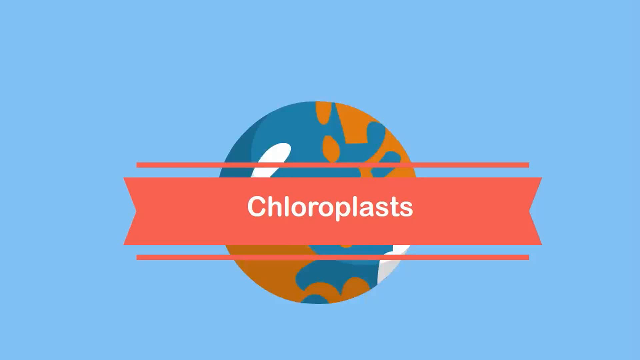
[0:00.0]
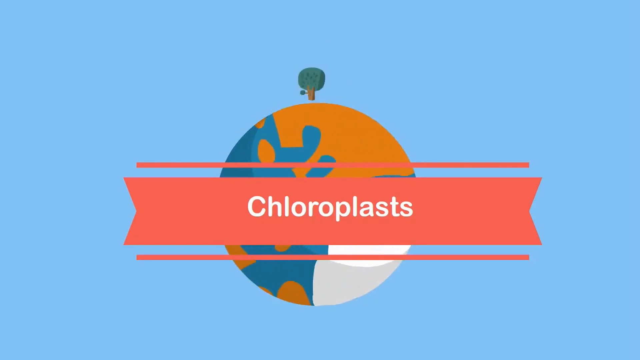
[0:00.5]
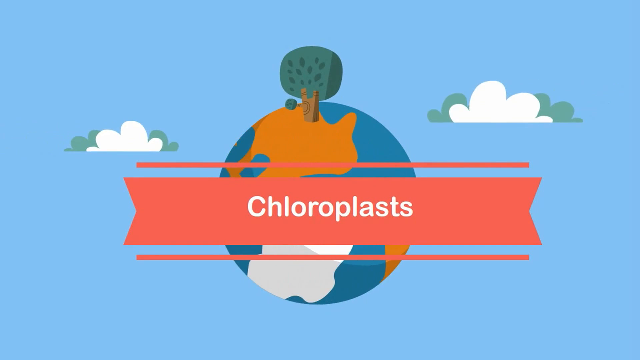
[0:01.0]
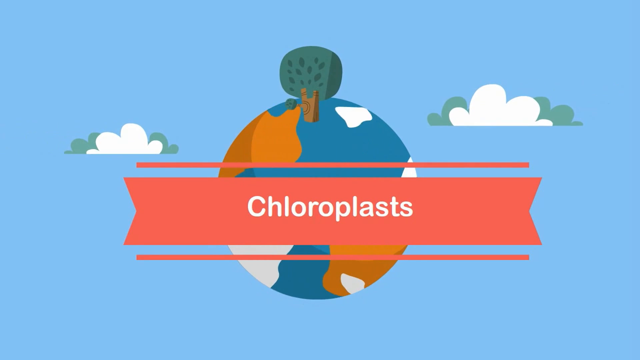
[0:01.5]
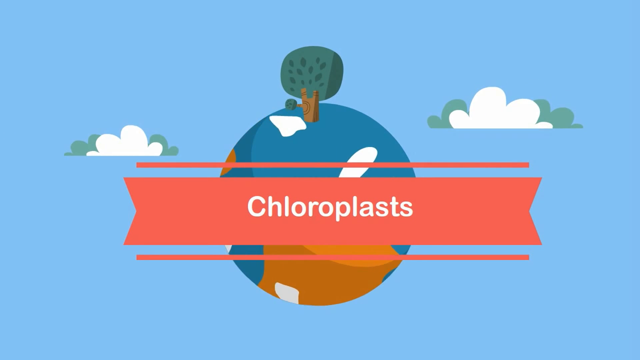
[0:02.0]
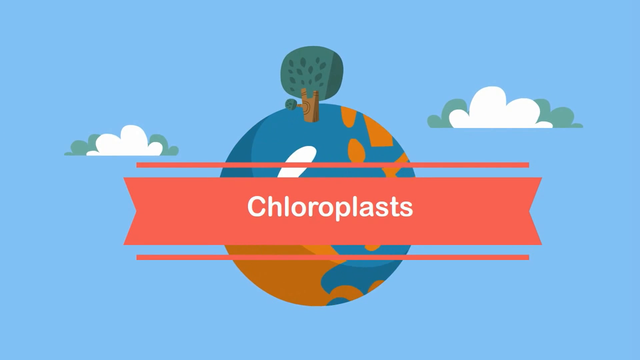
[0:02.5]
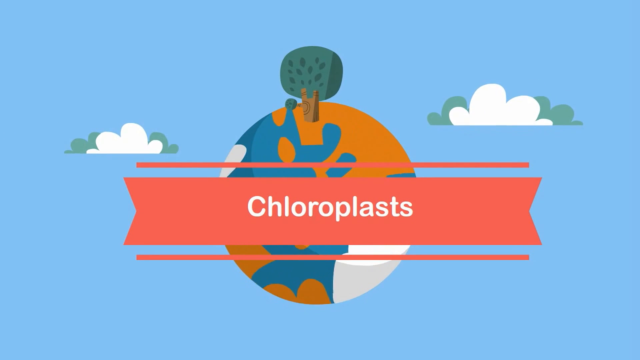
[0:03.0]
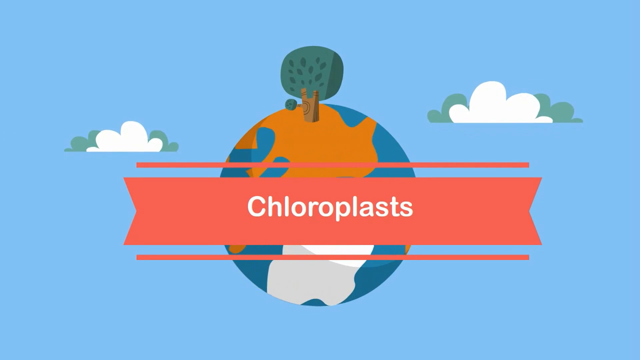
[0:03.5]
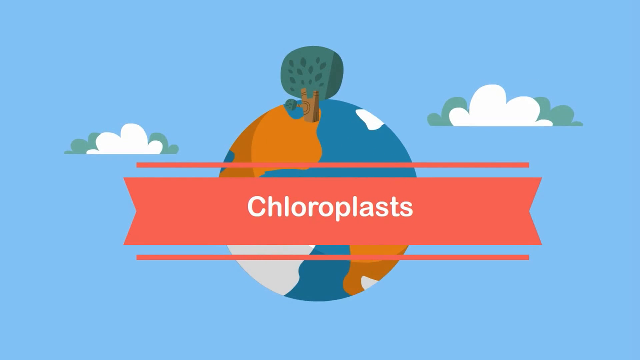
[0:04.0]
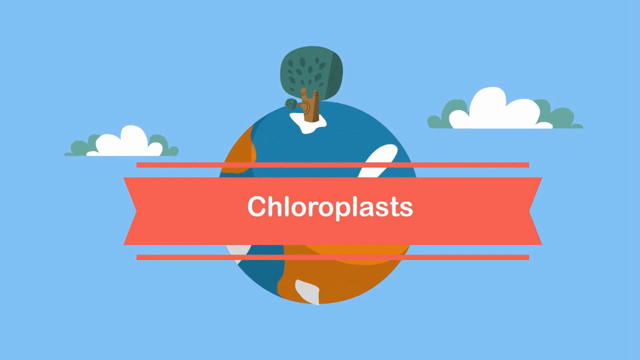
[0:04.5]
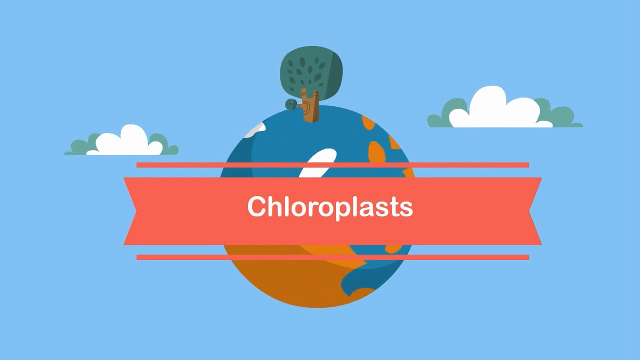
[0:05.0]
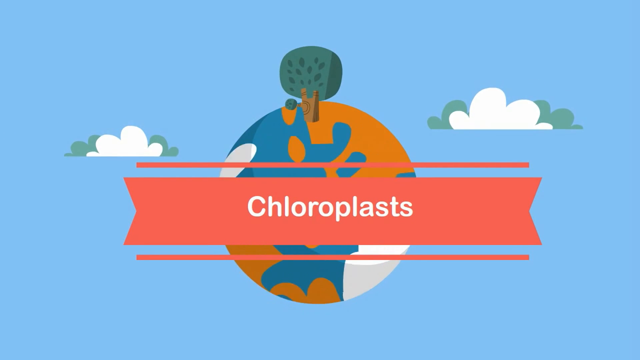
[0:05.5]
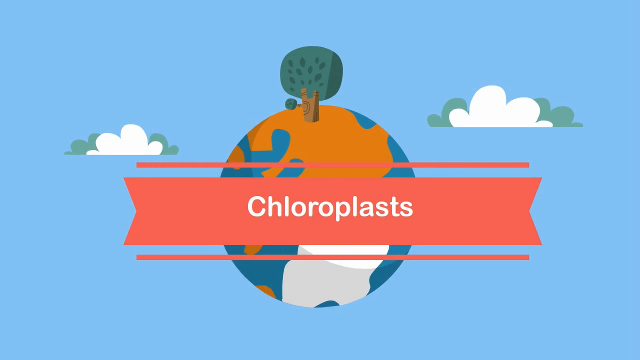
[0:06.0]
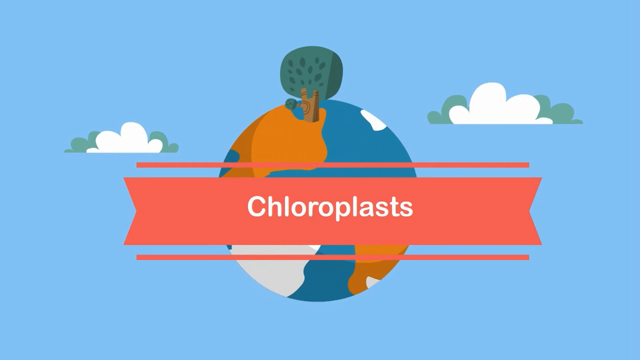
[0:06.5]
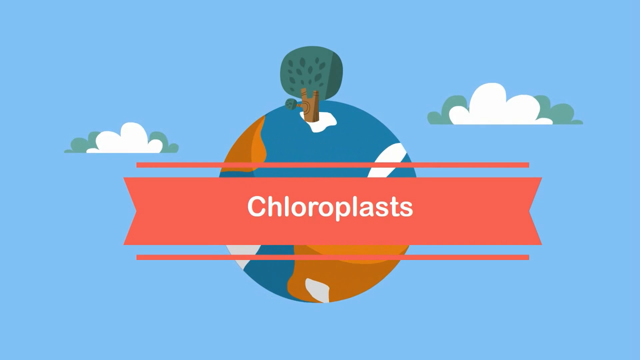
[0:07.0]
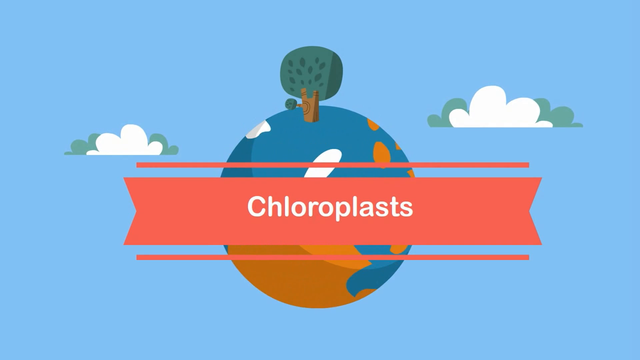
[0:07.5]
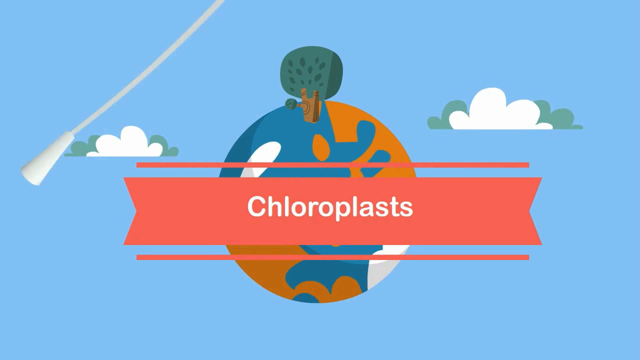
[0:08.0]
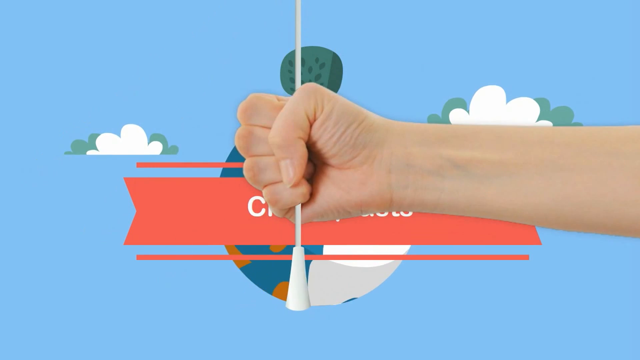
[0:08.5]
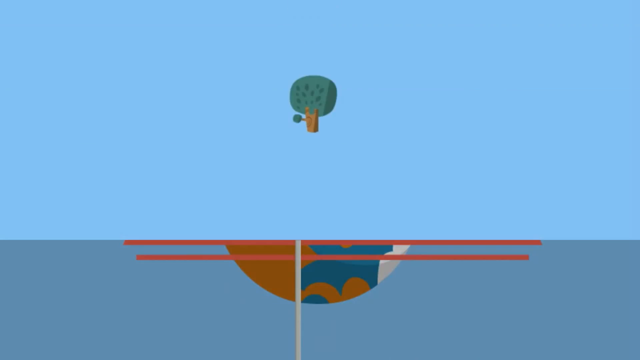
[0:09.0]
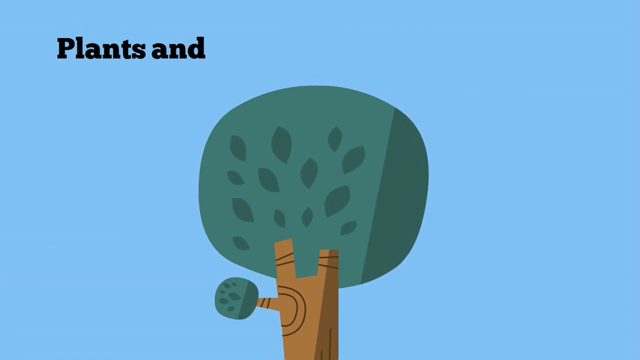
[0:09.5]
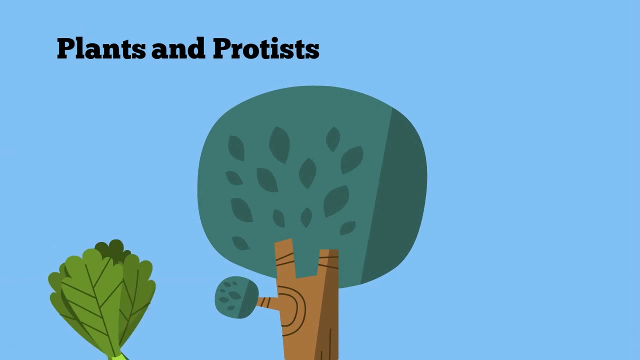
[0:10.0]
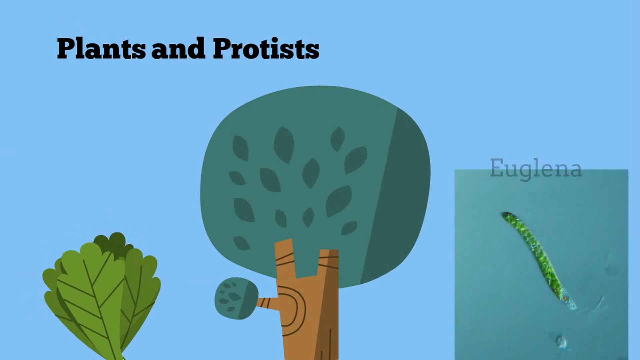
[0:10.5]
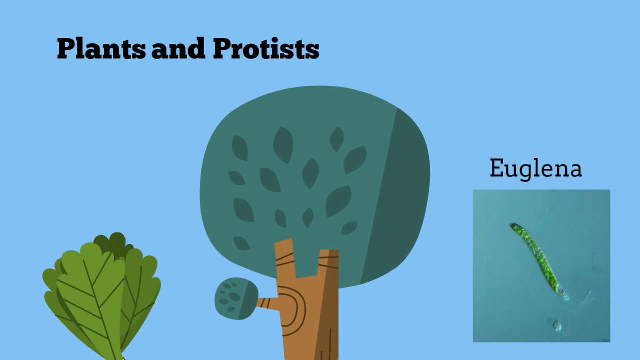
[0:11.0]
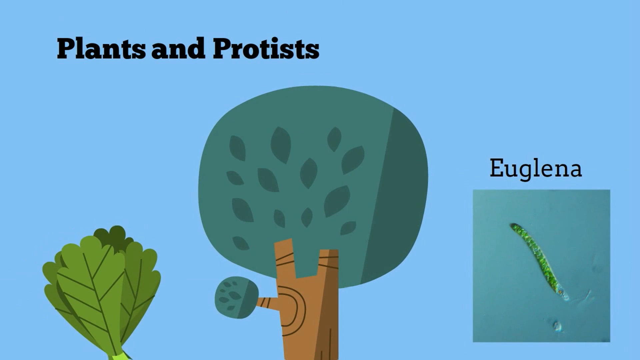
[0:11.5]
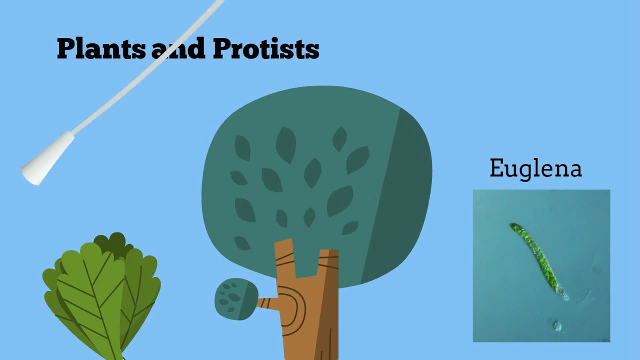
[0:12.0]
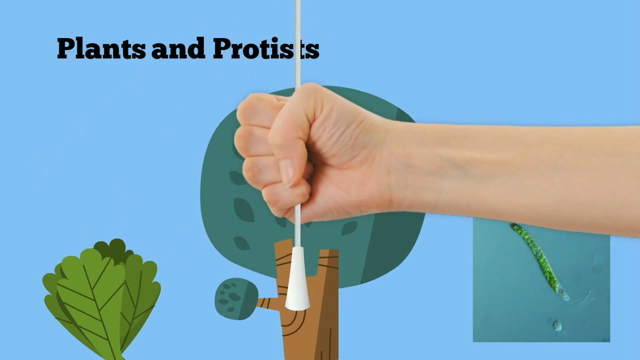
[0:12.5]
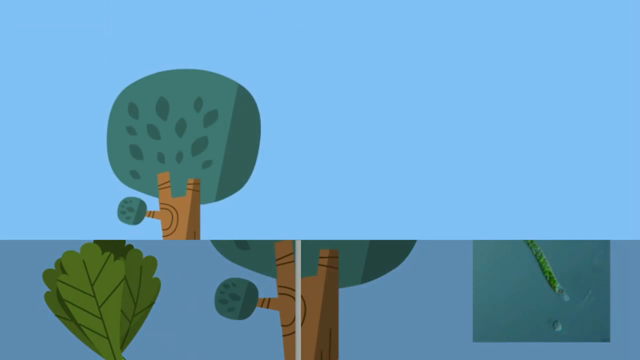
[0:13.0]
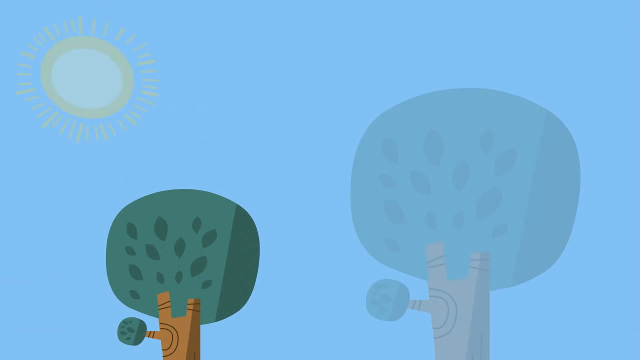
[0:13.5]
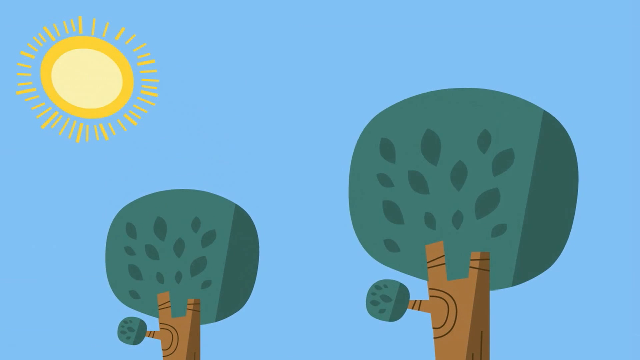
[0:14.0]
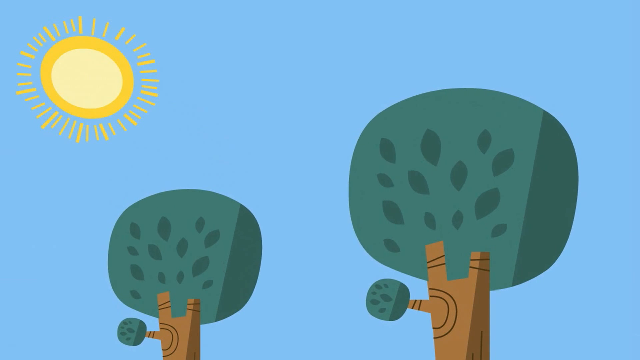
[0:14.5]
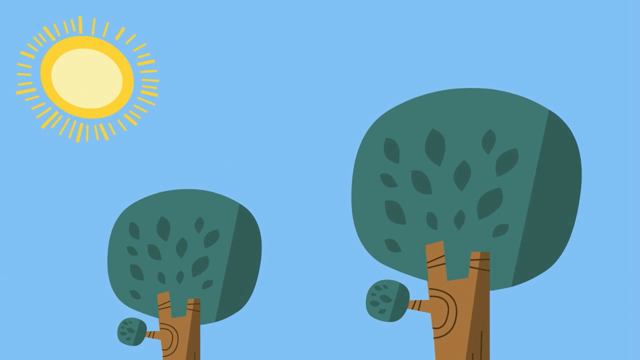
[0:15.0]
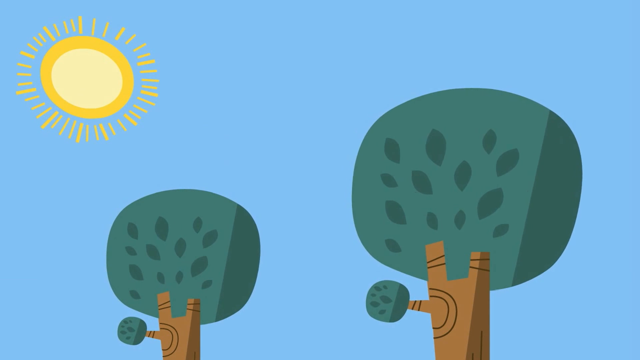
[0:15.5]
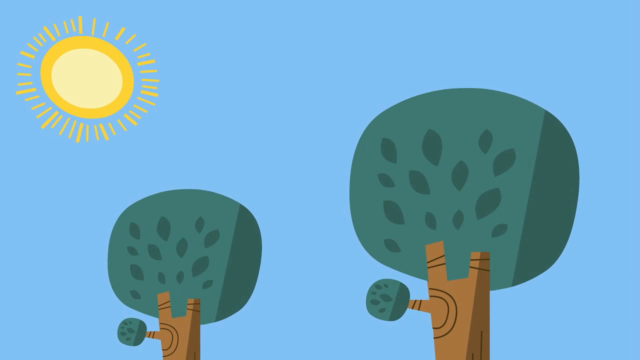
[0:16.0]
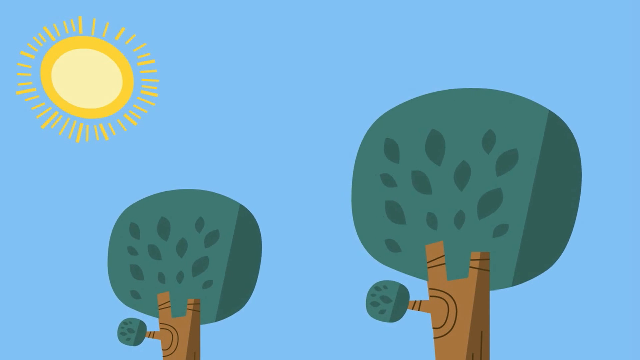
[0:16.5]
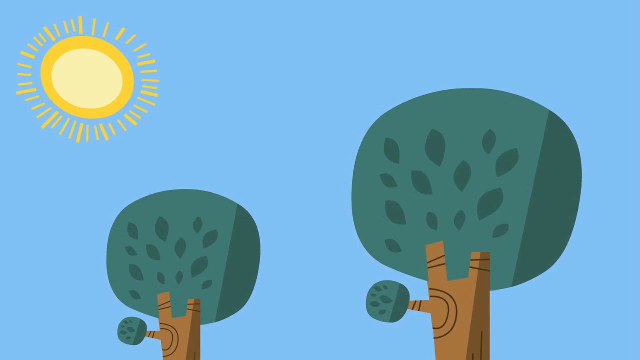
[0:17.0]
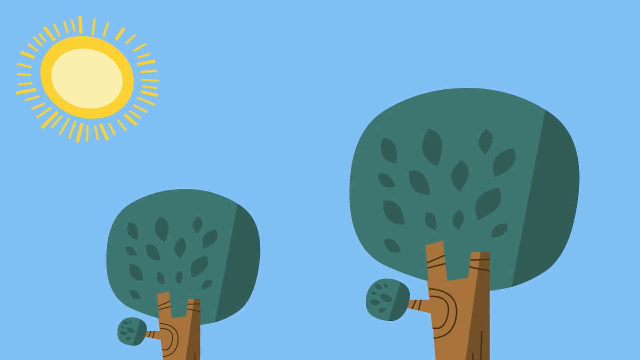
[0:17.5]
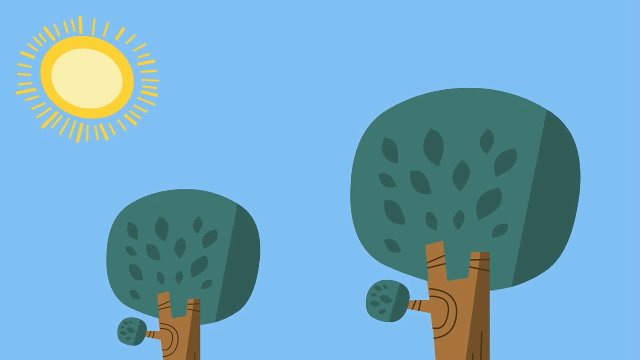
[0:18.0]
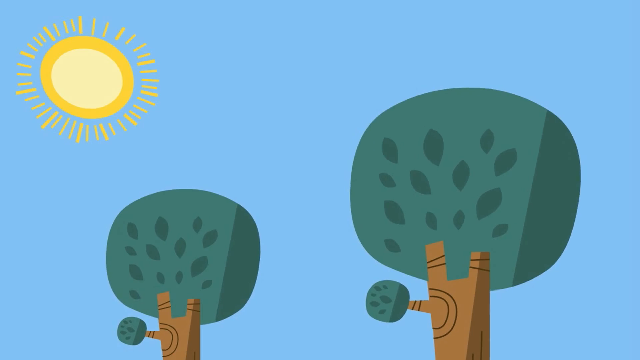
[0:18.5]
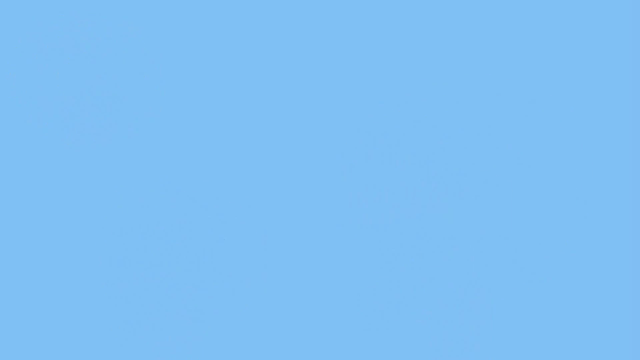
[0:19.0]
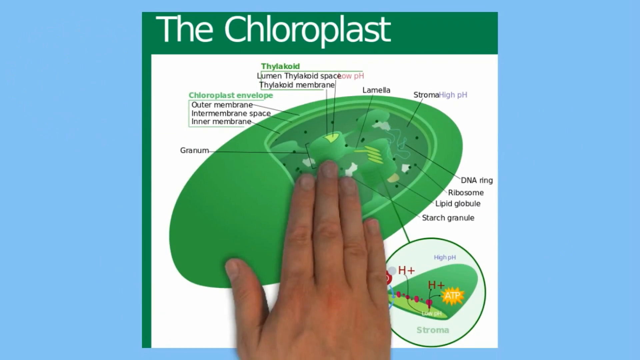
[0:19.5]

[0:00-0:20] Against a blue background, there is something on the left side that seems to be a cloud or a bush. In the middle of the screen is an orange-ish banner with reddish-orange lines above and below it, and white text in the middle reads "Coral Blast." Behind it is a blue planet with some orange and white on it, and at the very top there looks to be a tree. In the animation, another small white, bluish cloud comes in on the right side, and the world spins; the tree seems to stay on top of the planet even as it keeps spinning. Soon after, a small white line comes down the middle like a lamp pull cord, and it looks like someone is holding down on it. A hand comes out and pulls it down like a light switch, and after the yank the screen comes down to a new screen. Black text at the top reads "Plants and Protest," and there is a tree in the middle. A small plant spawns on the left, text on the right reads "Euglena," and there is some kind of small bacteria. The lamp-pulling animation happens once more. The graphics change to a sun in the top left with some trees in the middle of the screen, waving as if the wind is blowing them.